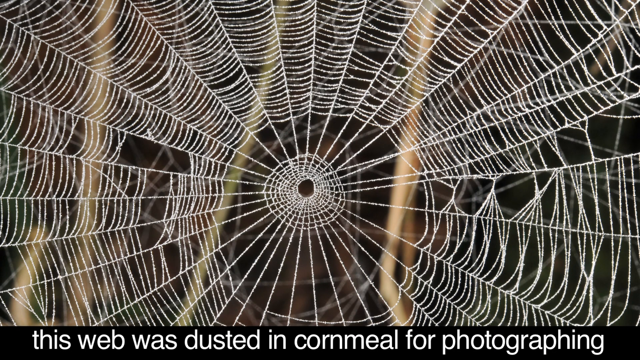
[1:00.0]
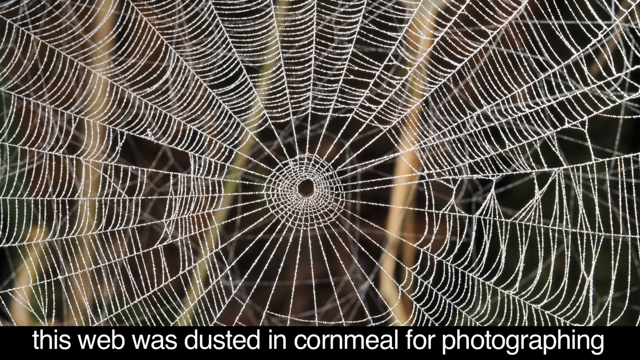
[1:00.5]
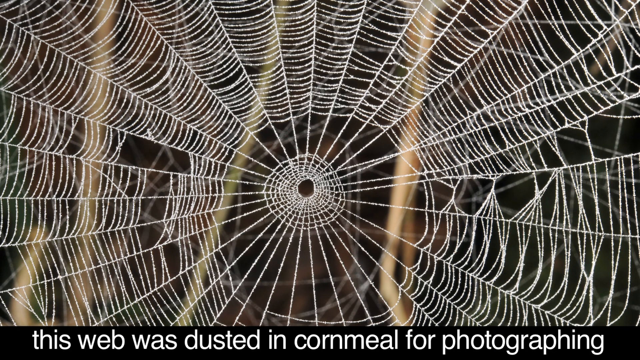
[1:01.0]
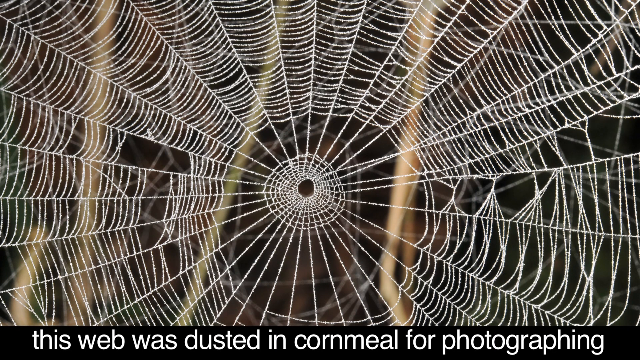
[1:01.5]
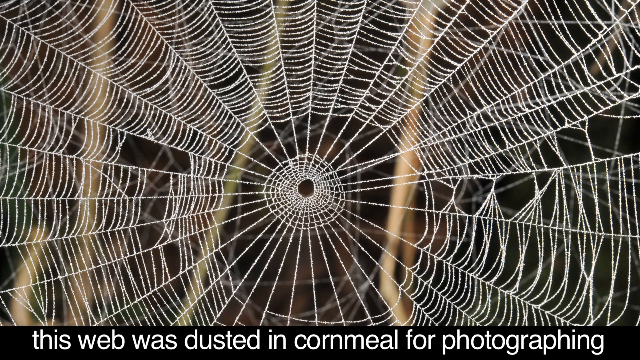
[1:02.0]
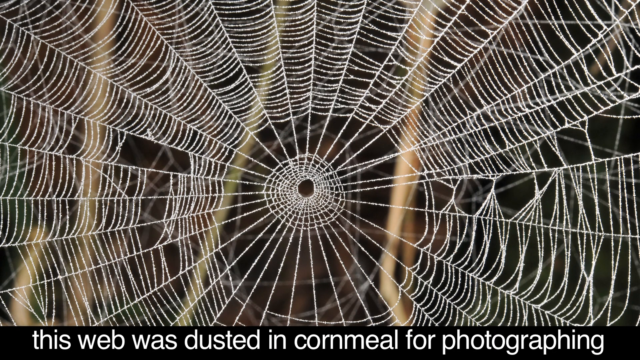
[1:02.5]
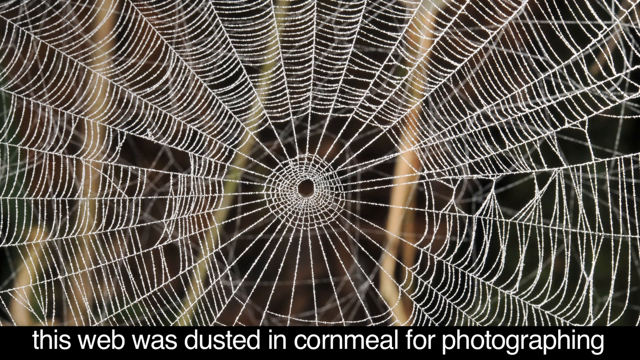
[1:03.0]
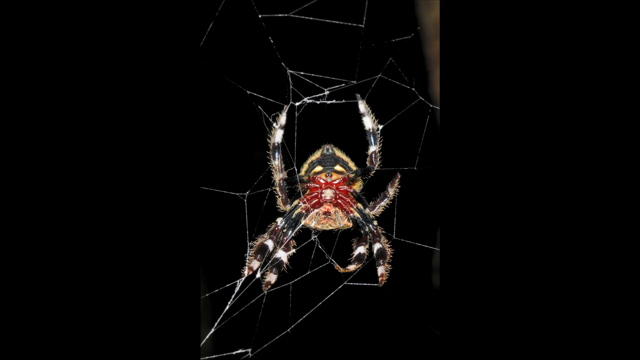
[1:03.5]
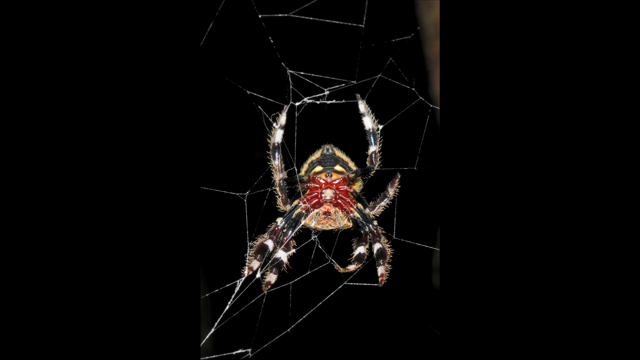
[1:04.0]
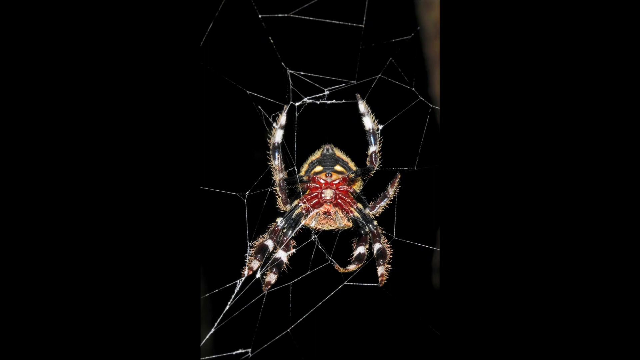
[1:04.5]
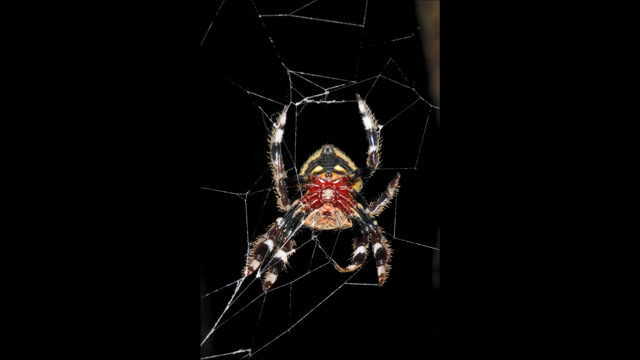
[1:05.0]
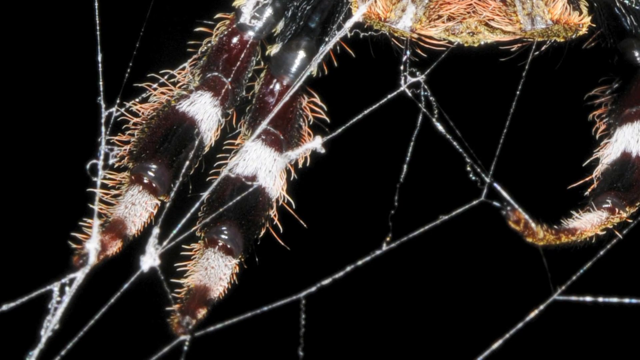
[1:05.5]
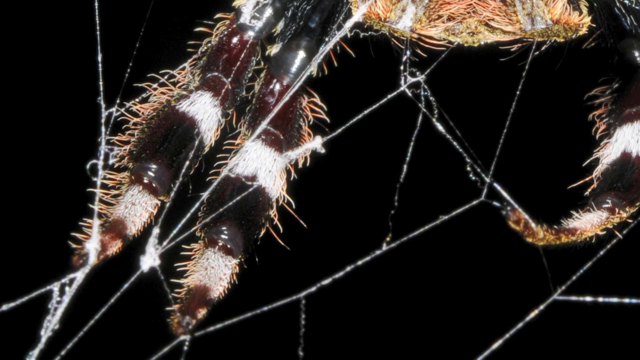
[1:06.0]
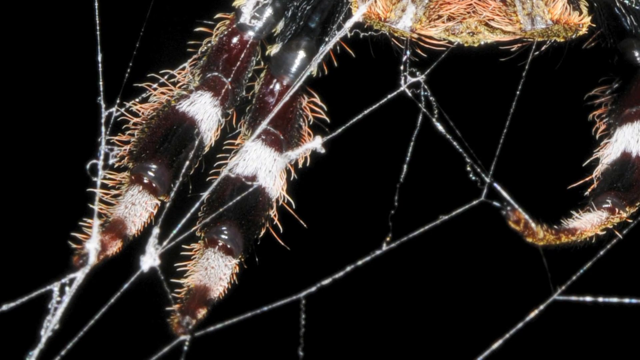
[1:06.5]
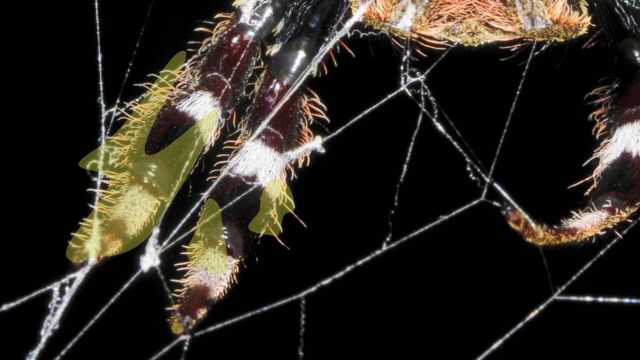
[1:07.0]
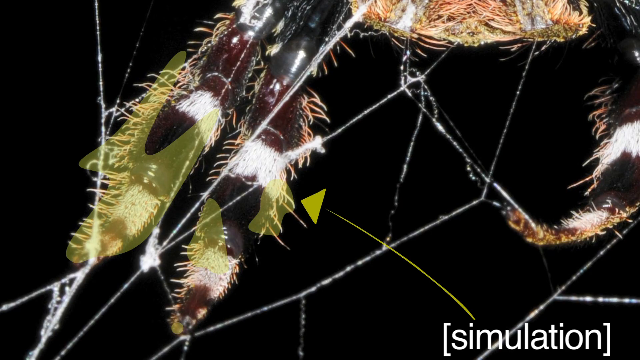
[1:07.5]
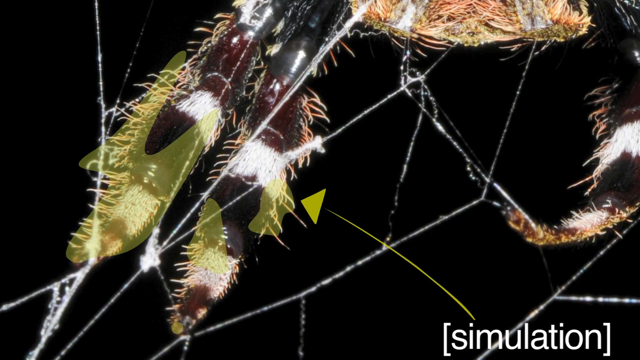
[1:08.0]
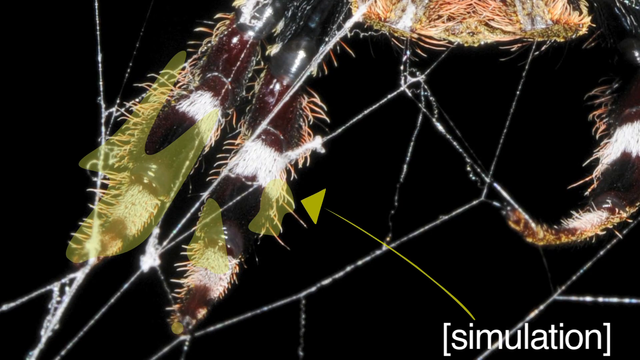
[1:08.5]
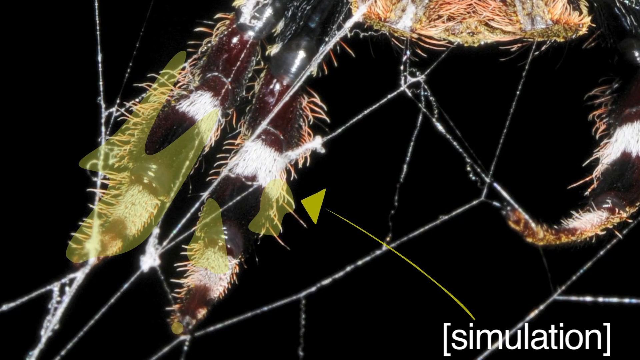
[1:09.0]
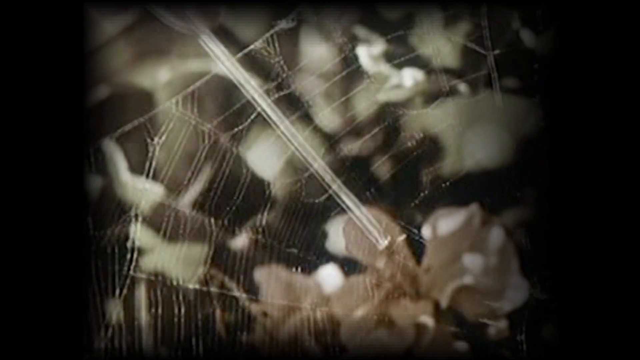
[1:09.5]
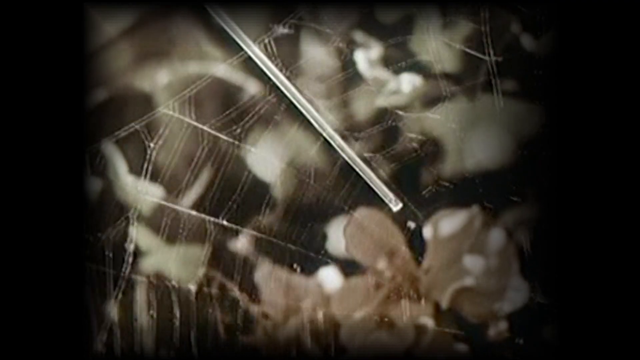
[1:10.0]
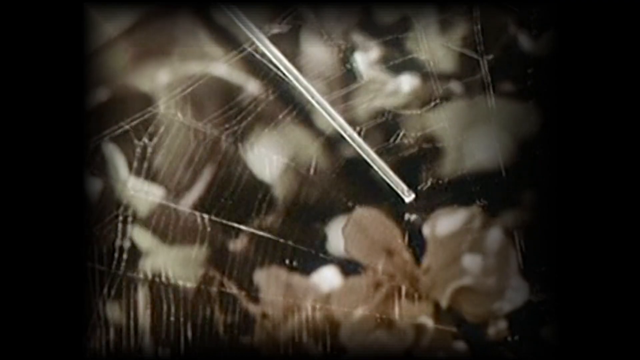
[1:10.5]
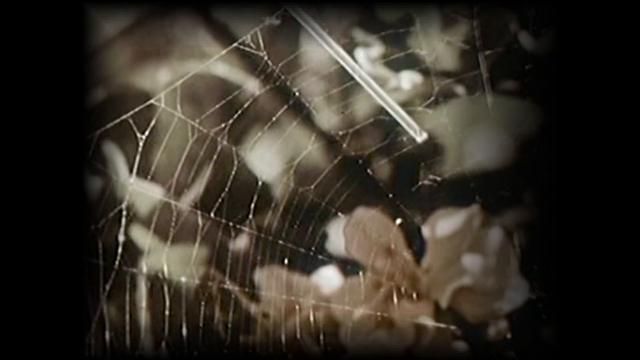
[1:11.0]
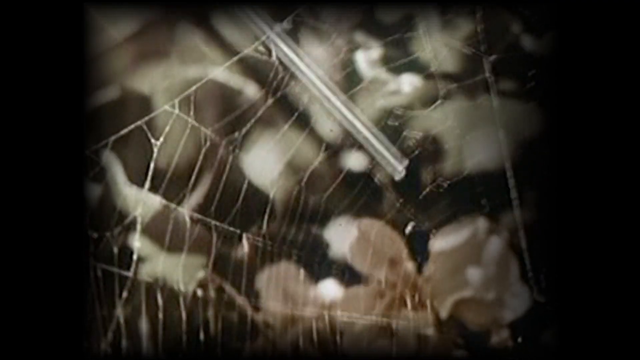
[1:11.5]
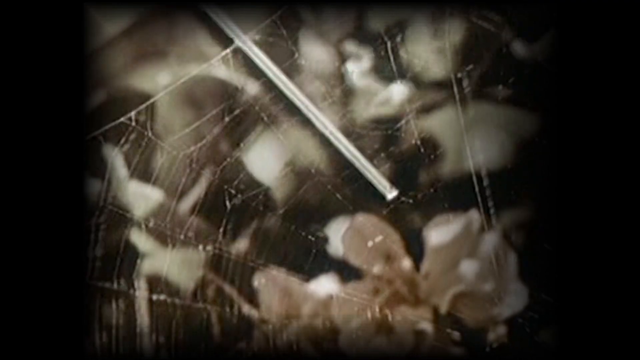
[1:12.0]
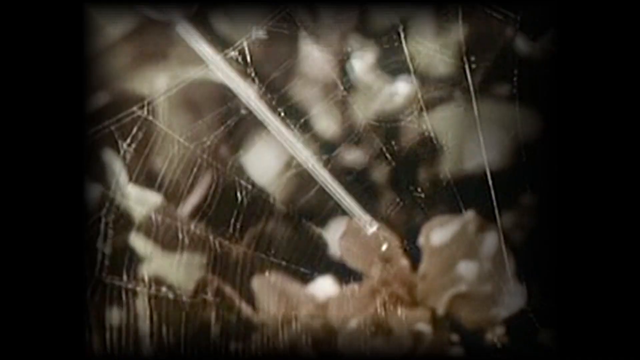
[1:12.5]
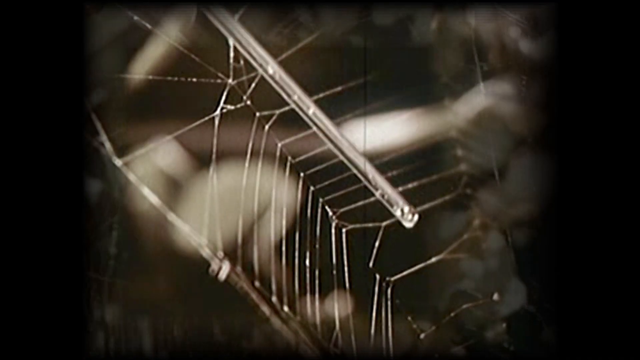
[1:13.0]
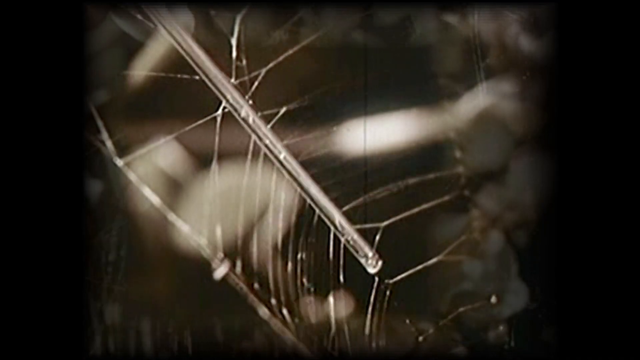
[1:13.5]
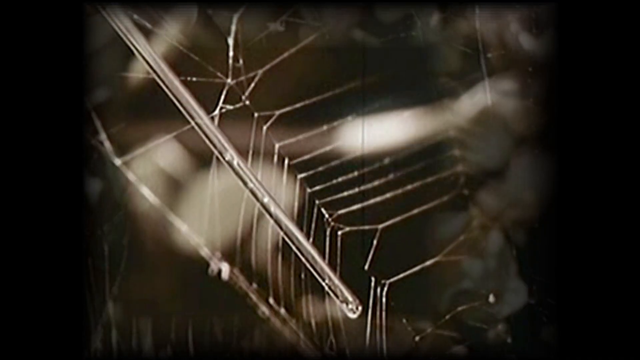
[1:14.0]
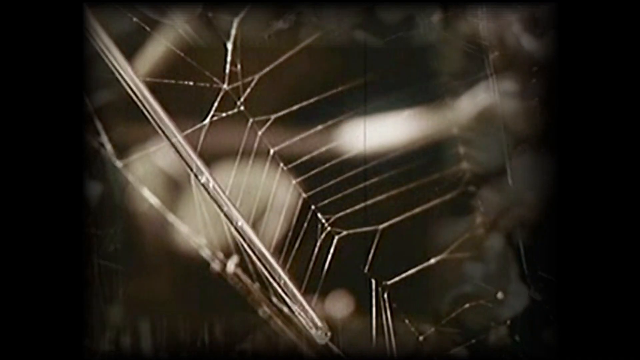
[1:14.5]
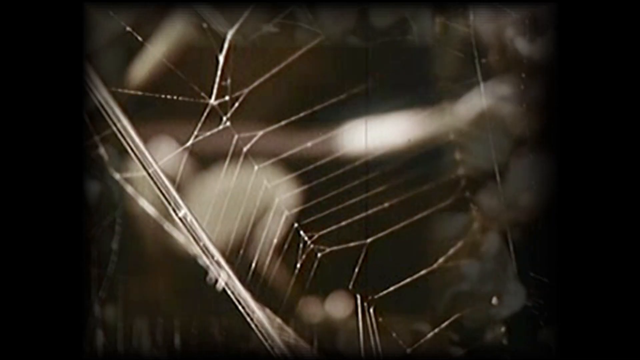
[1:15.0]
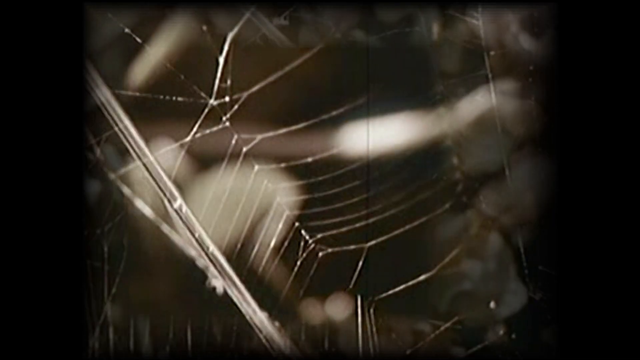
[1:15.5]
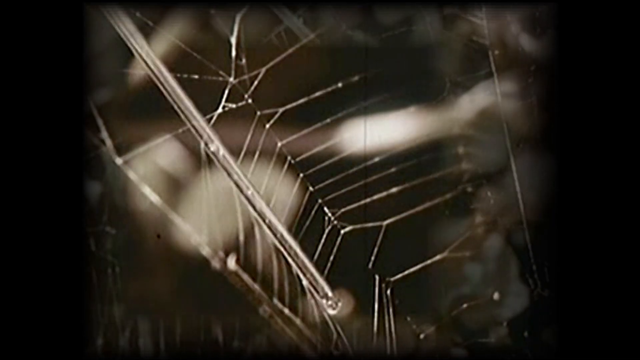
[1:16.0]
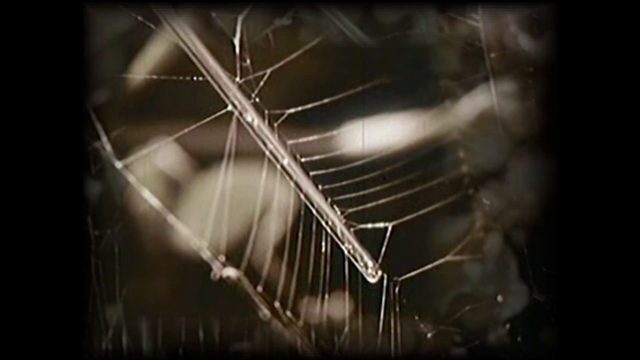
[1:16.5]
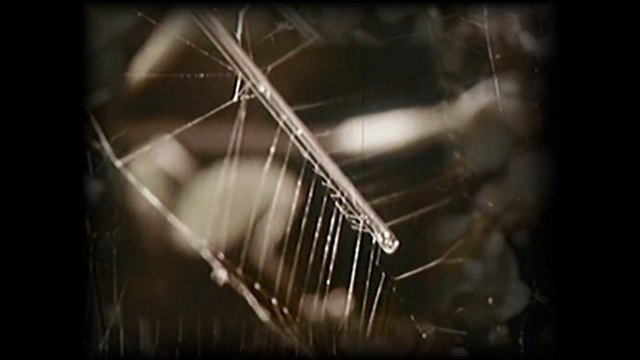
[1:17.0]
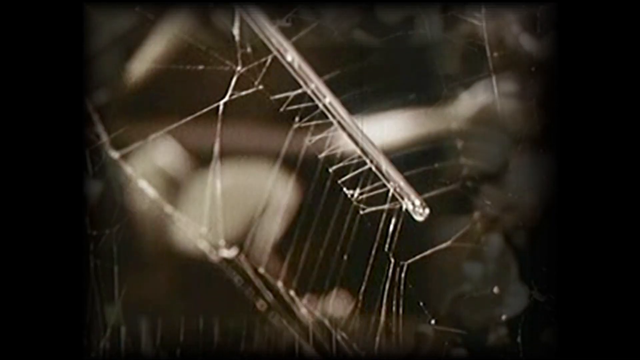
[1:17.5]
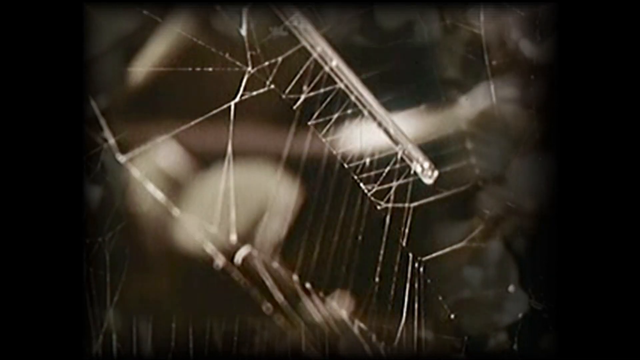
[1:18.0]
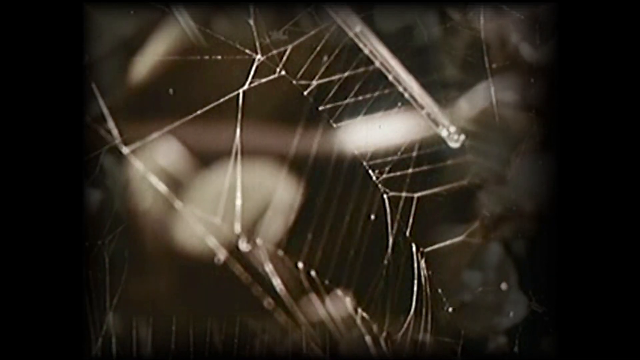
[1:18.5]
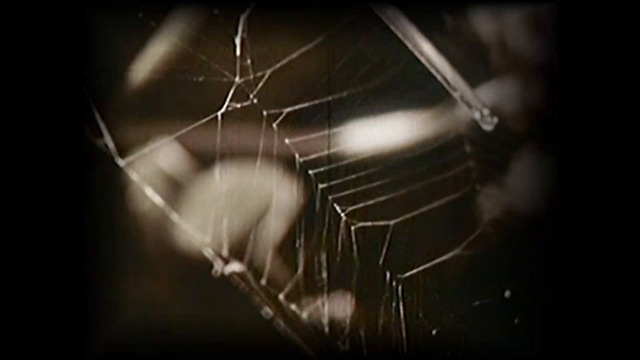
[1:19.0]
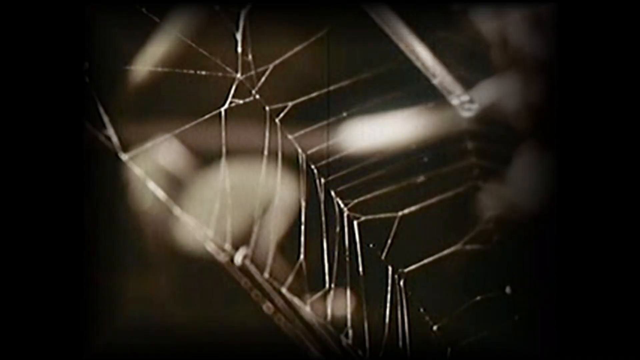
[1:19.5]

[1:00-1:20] A spider's web is on the entire screen and looks very white, with an animated, drawn-looking spider with fuzzy legs. The word "simulation" appears. Footage shows a little straw being moved over the web; the web is sticky, and as the straw is pulled away it pulls up several sections of the web. The drawn spider looks like a cute little spider with fuzzy legs, red on its belly with a circle in the middle, yellow eyes or yellow sections on the bottom, white spots and some stripes. A zoom in shows the little hairs, which are what the spider uses to avoid sticking.